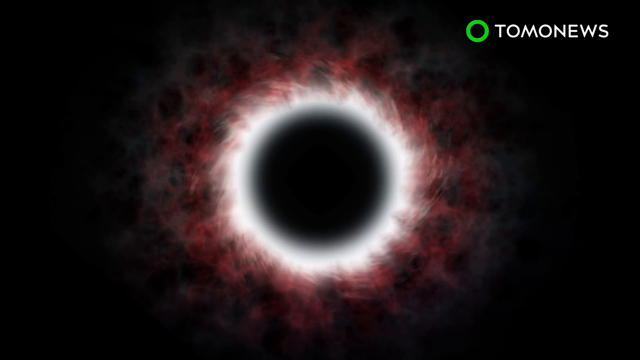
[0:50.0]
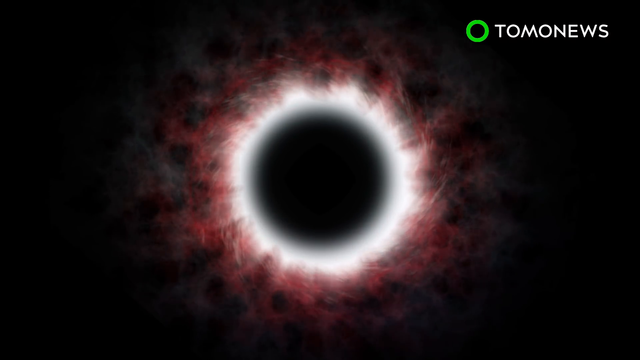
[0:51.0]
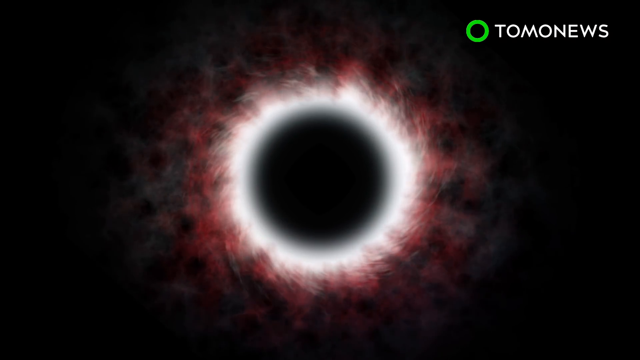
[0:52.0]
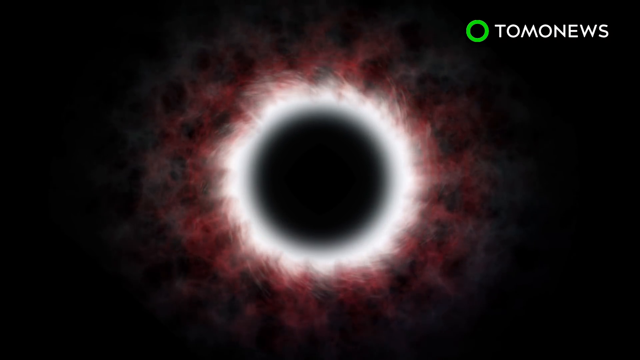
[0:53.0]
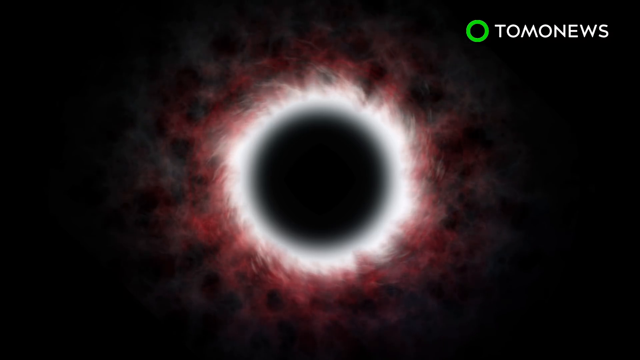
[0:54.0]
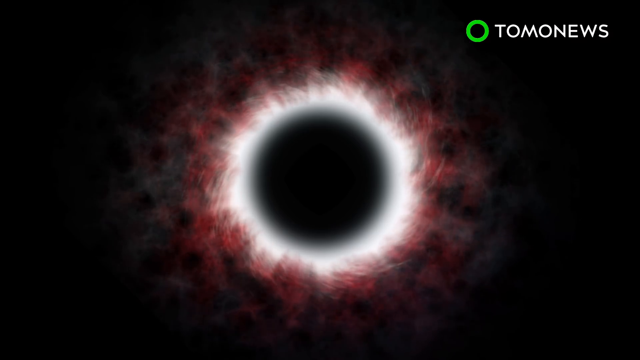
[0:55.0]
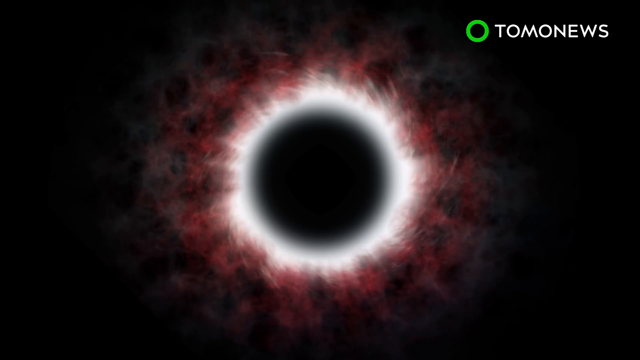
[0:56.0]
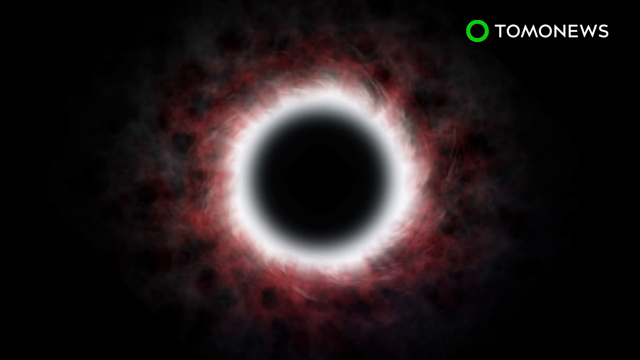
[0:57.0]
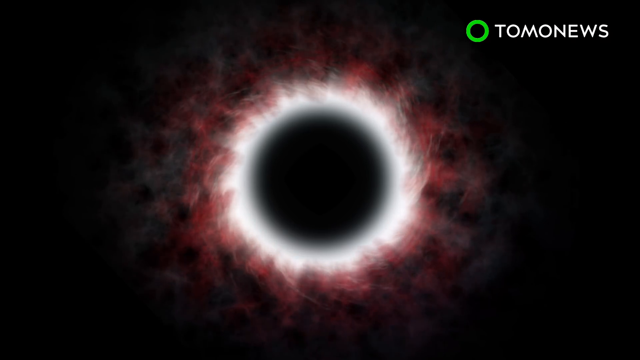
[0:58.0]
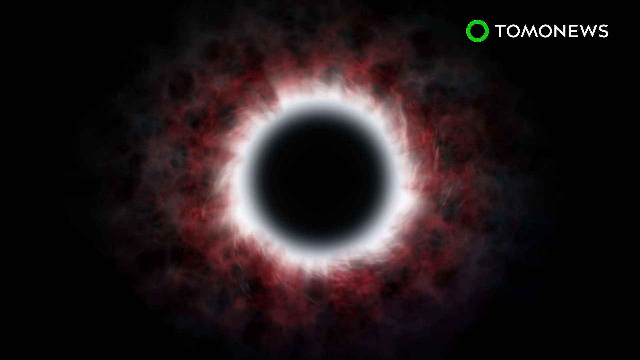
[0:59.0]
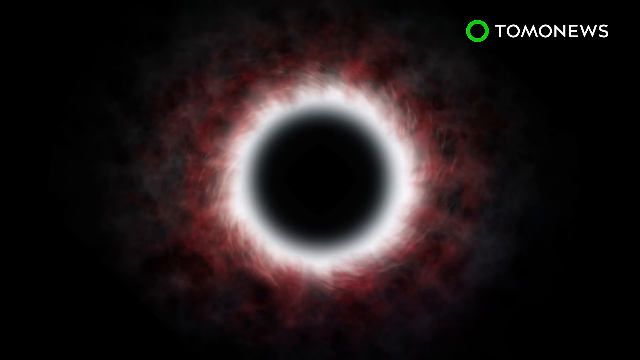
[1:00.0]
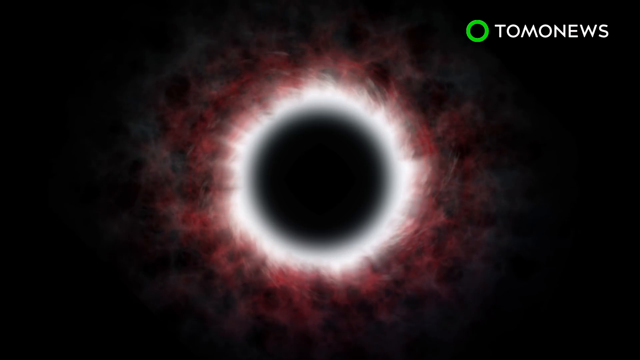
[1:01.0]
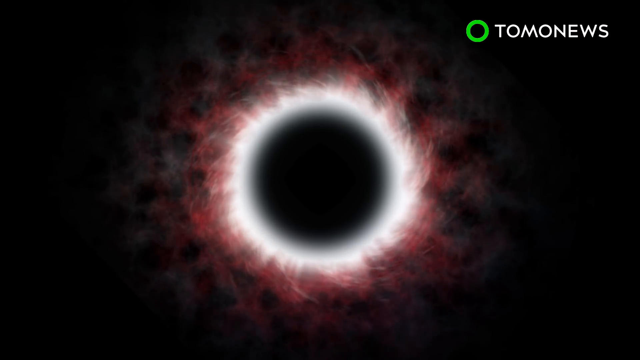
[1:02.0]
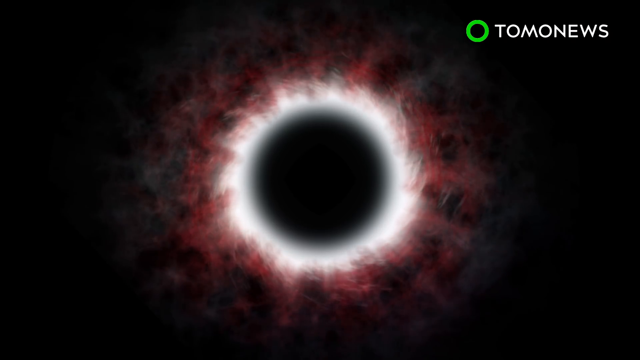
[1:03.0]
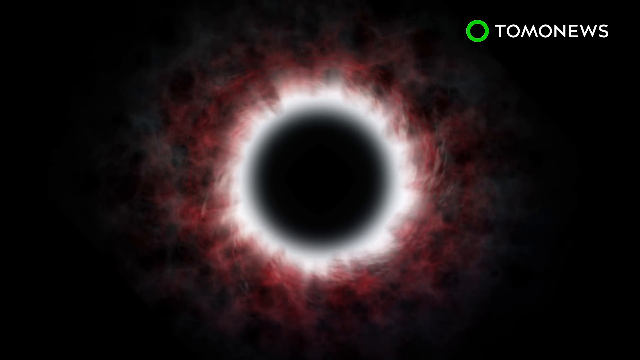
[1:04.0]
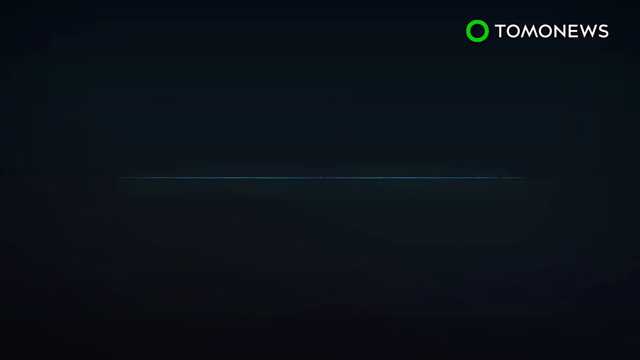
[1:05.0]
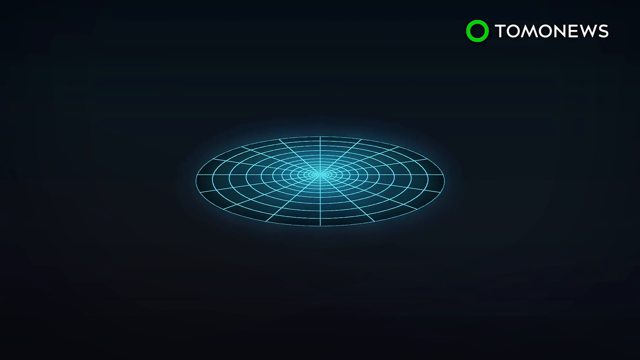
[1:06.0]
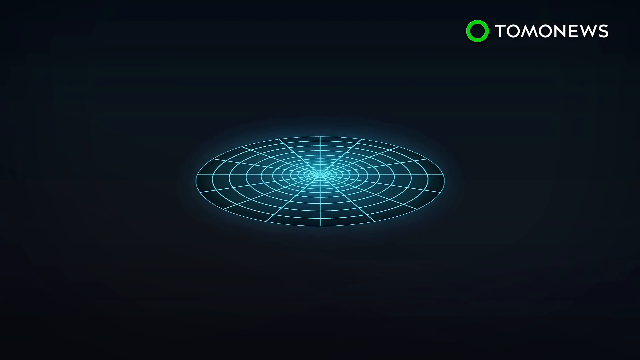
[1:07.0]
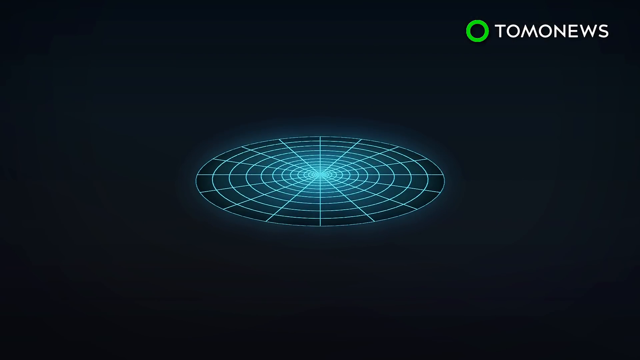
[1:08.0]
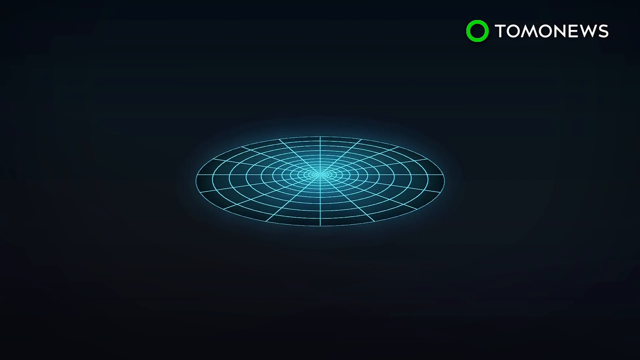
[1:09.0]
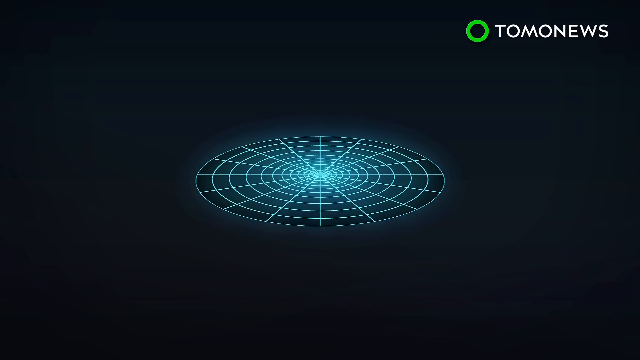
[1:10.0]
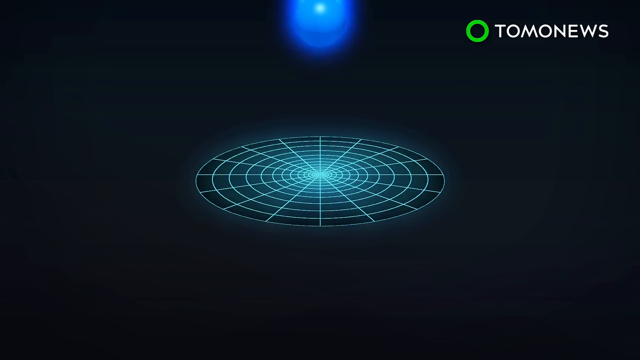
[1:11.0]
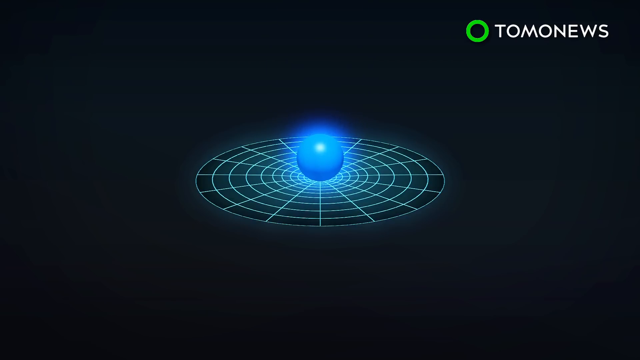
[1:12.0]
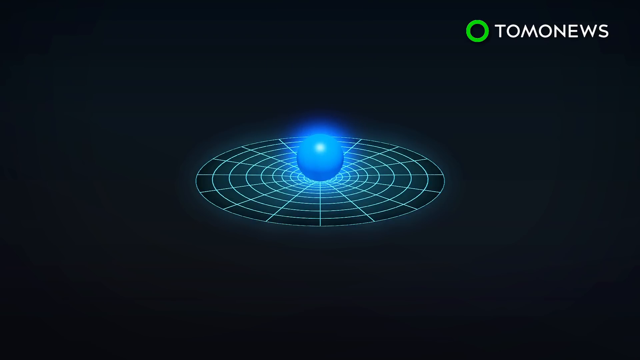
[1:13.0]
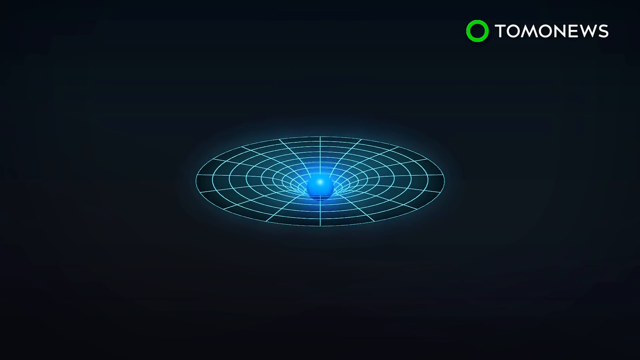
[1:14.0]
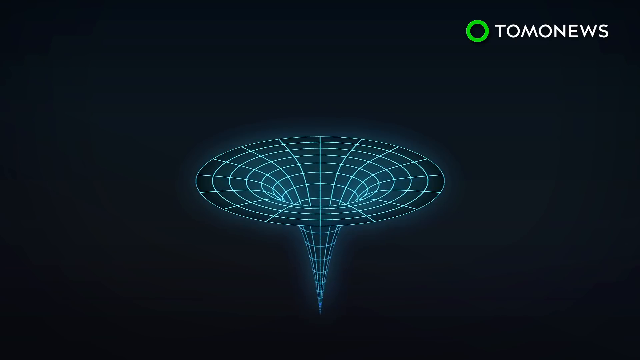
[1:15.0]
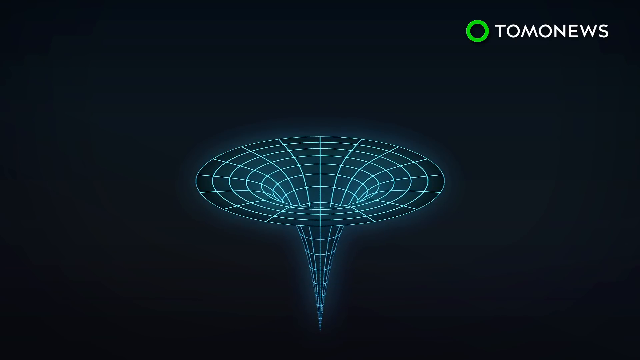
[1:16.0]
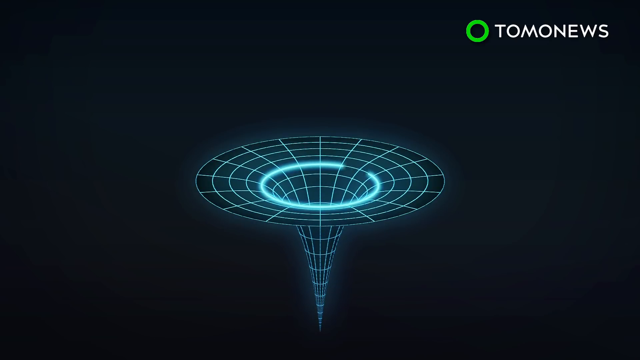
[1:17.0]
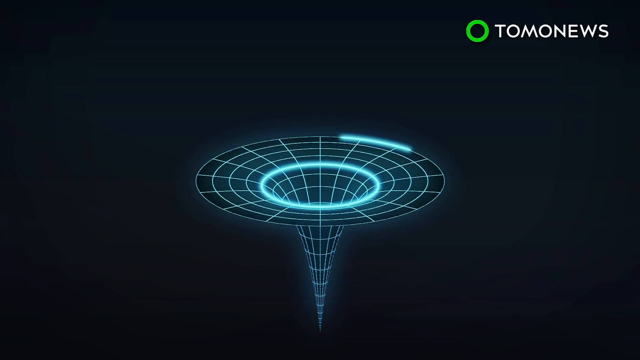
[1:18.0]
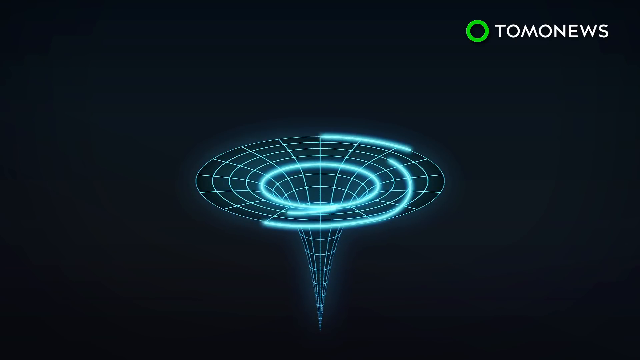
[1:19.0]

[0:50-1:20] The moon changes colours: it is dark at the center, then white, and red on the outside, with some colours that are not clear. Something that looks like an F, with lines on it, sinks down. Some clouds are visible and the weather looks quiet.